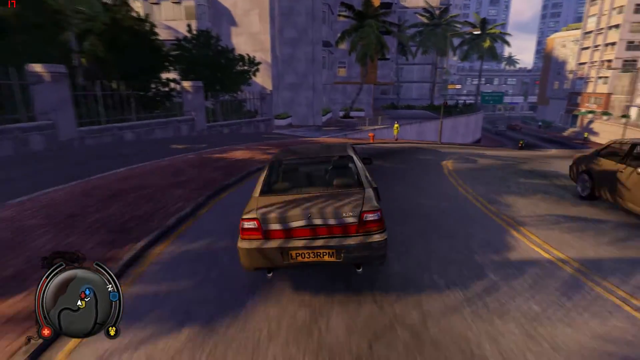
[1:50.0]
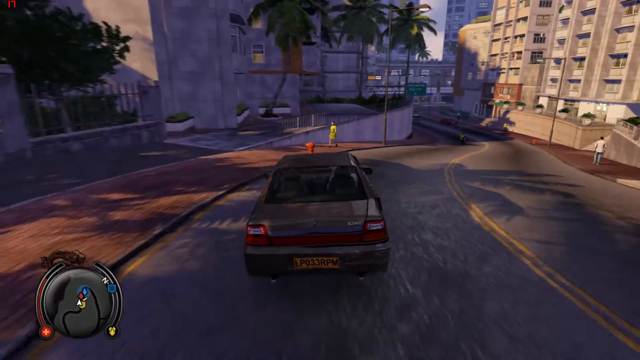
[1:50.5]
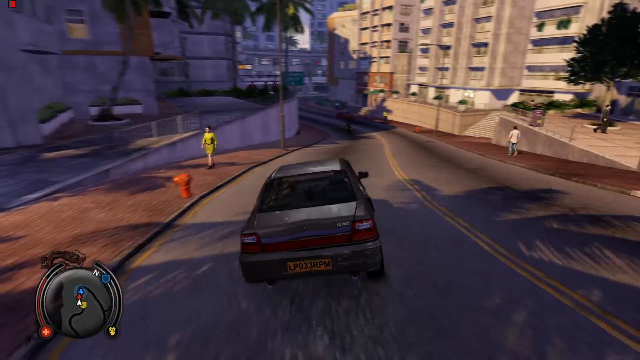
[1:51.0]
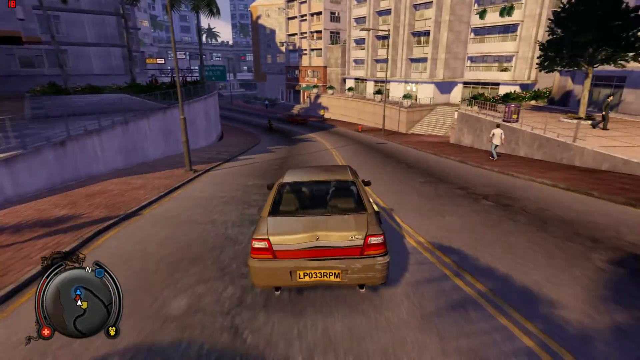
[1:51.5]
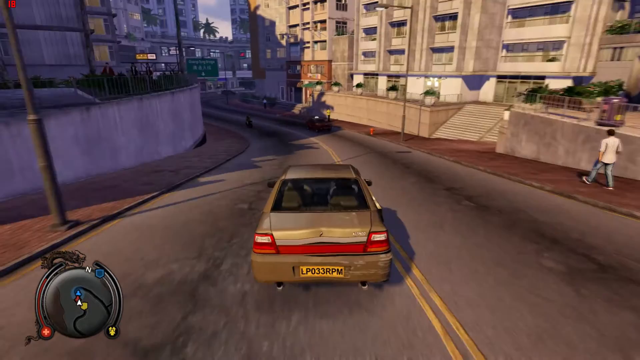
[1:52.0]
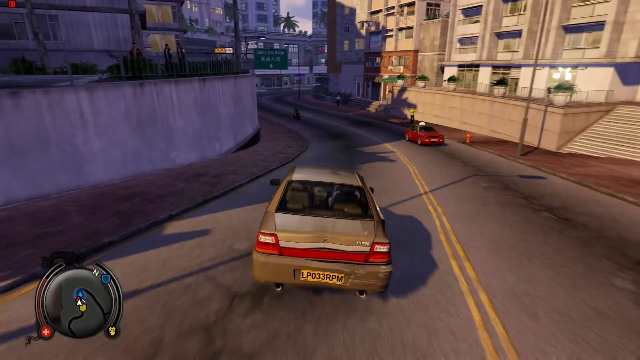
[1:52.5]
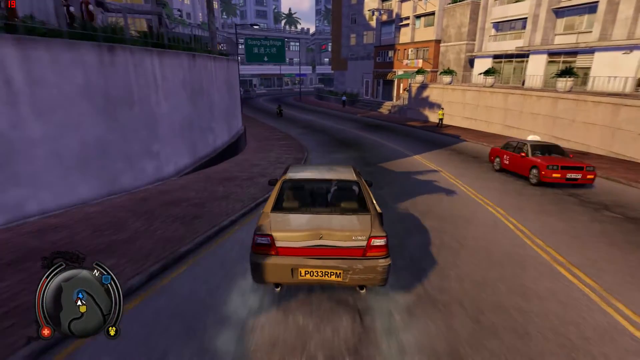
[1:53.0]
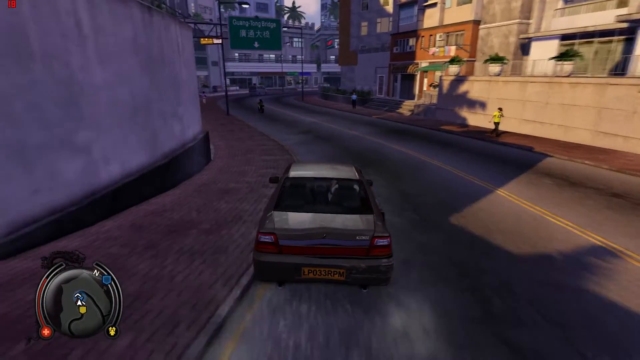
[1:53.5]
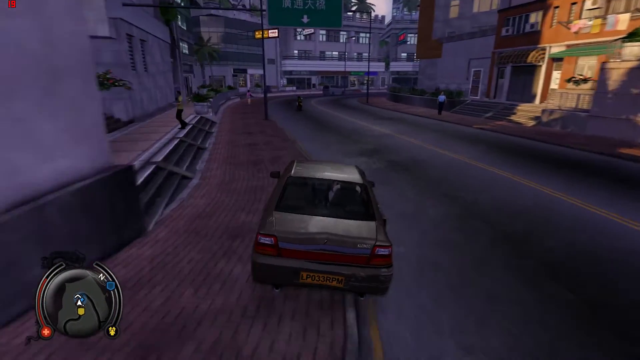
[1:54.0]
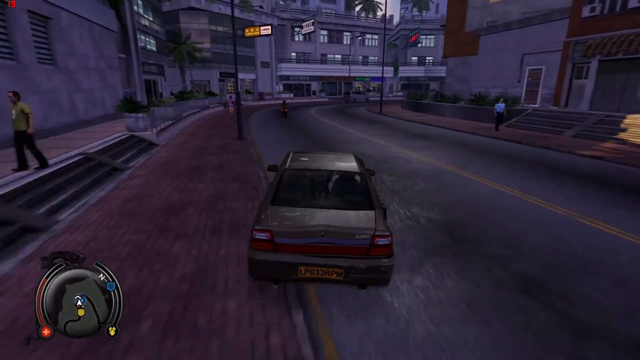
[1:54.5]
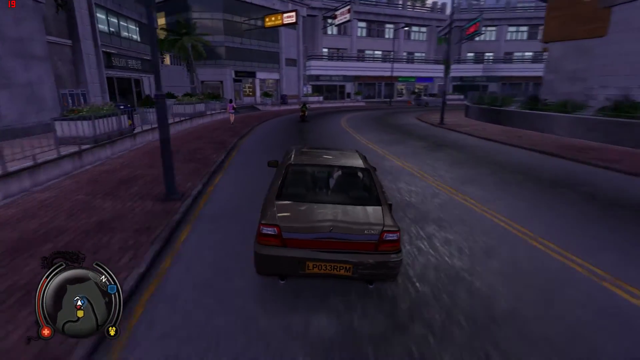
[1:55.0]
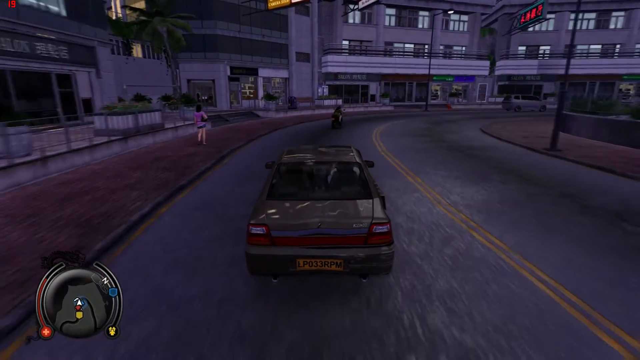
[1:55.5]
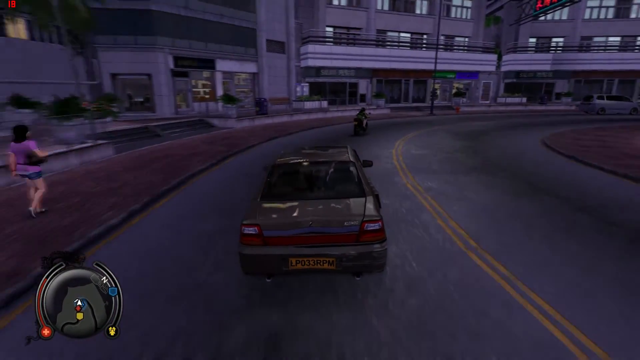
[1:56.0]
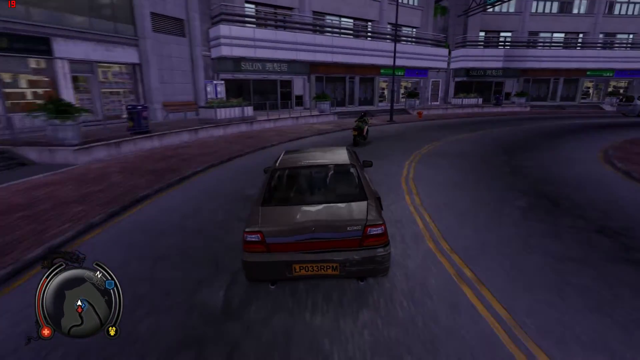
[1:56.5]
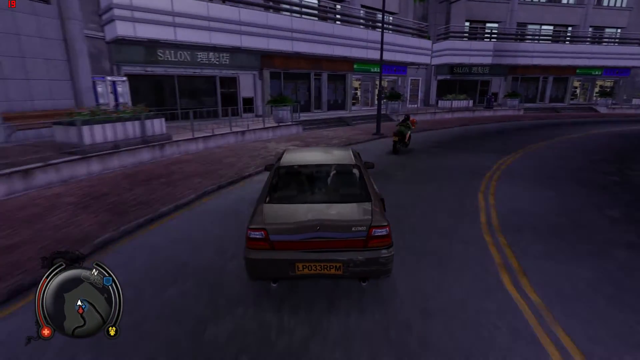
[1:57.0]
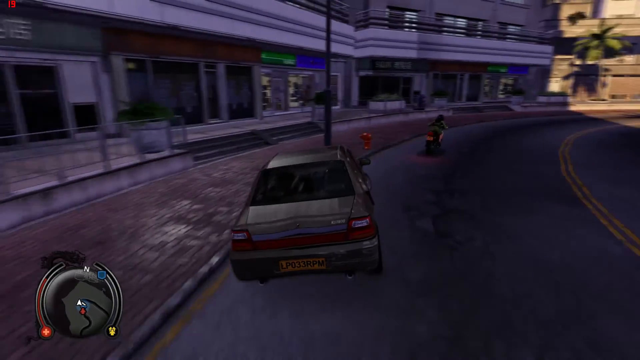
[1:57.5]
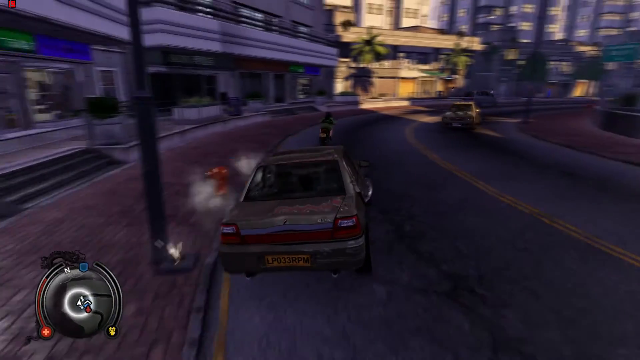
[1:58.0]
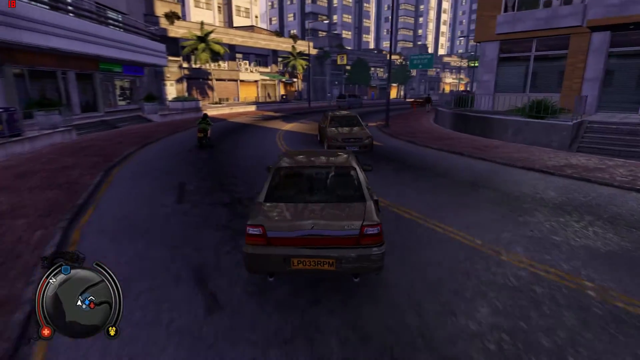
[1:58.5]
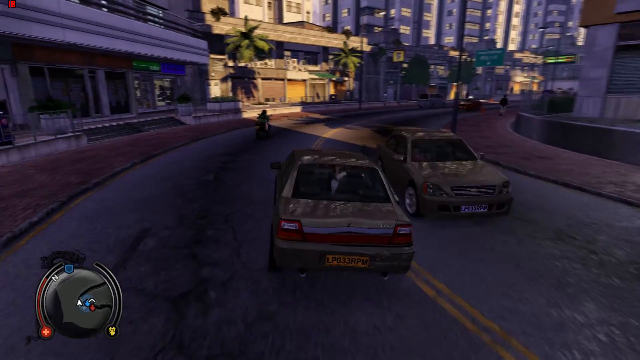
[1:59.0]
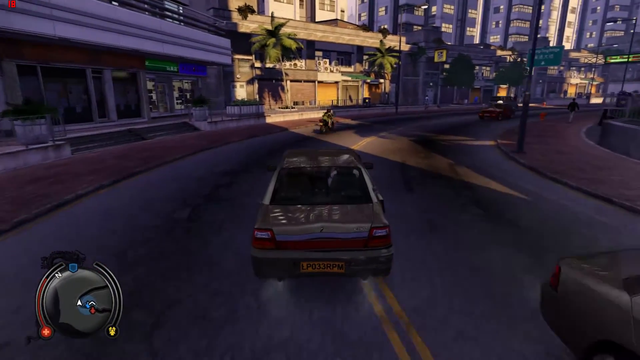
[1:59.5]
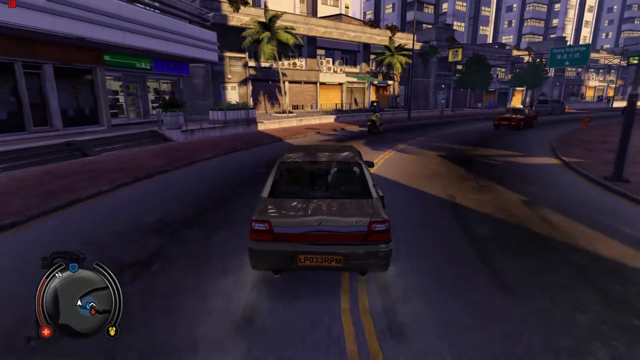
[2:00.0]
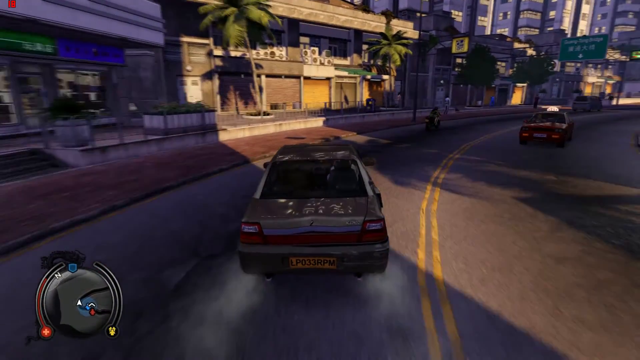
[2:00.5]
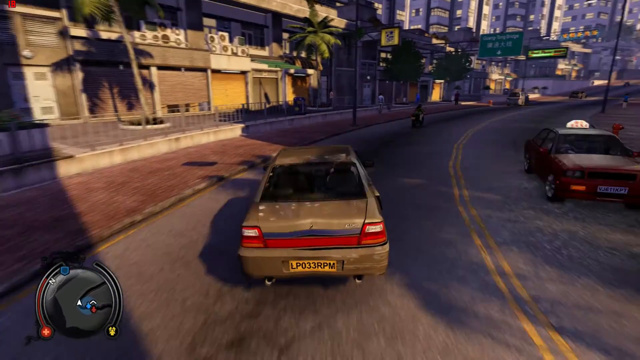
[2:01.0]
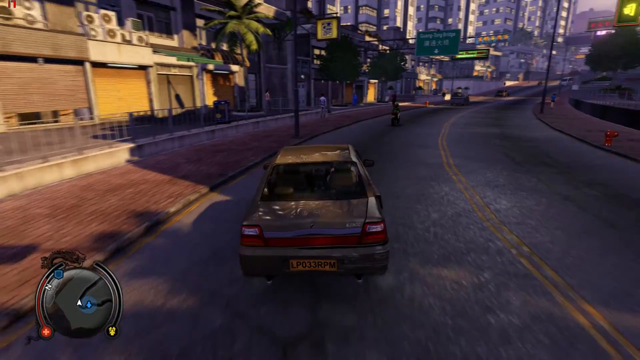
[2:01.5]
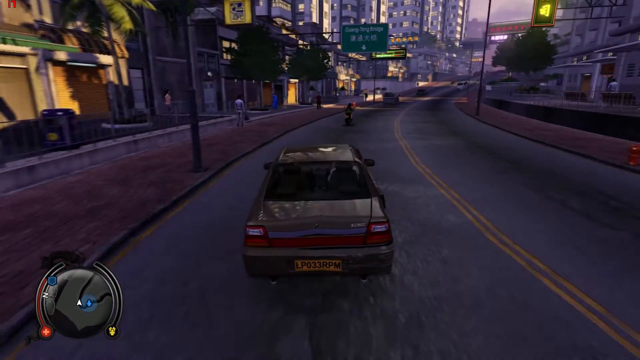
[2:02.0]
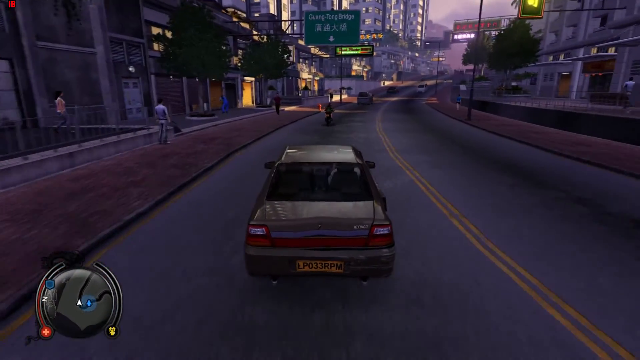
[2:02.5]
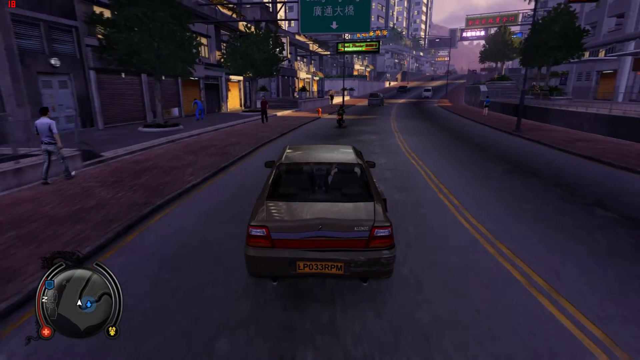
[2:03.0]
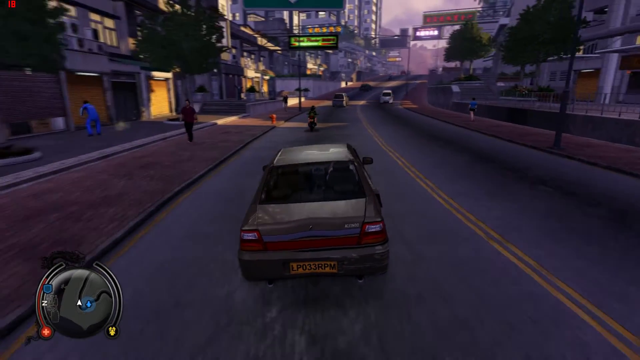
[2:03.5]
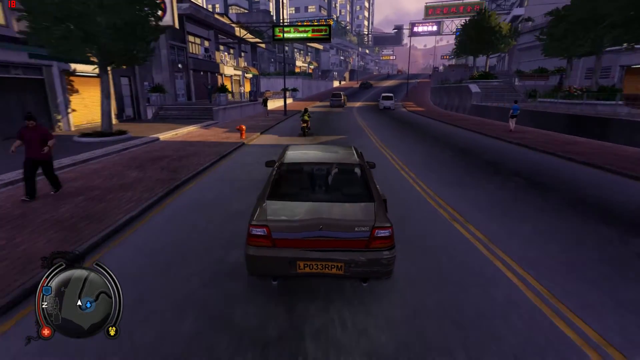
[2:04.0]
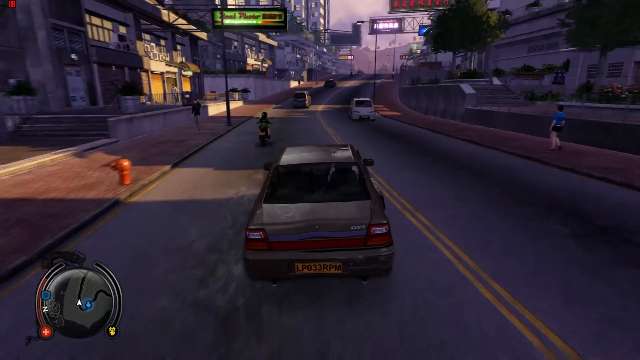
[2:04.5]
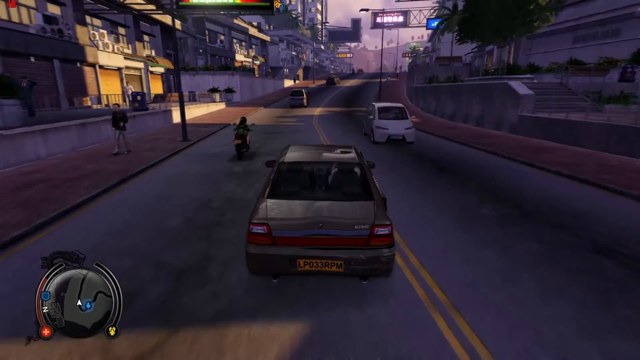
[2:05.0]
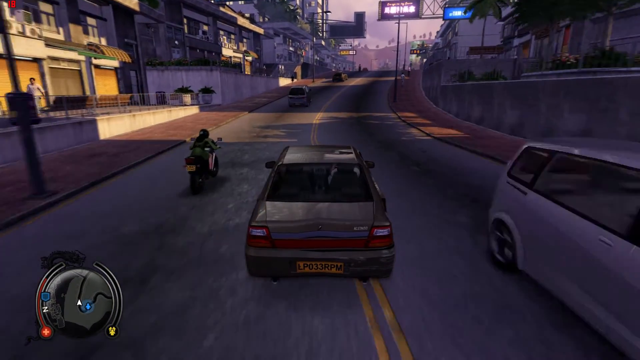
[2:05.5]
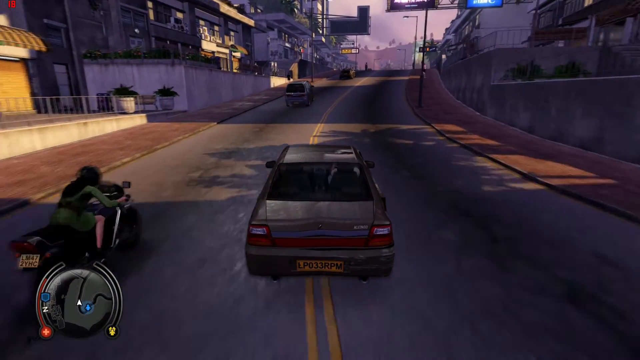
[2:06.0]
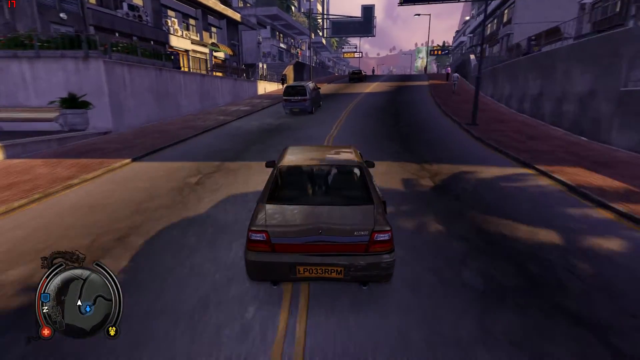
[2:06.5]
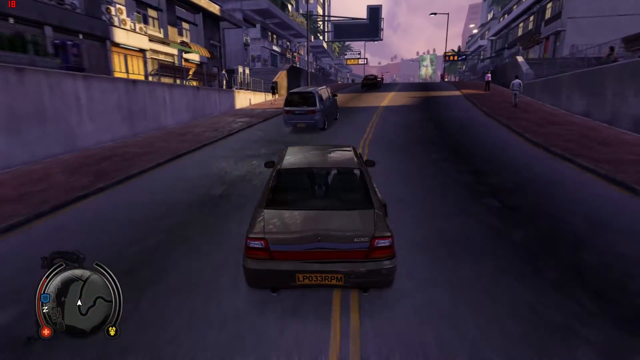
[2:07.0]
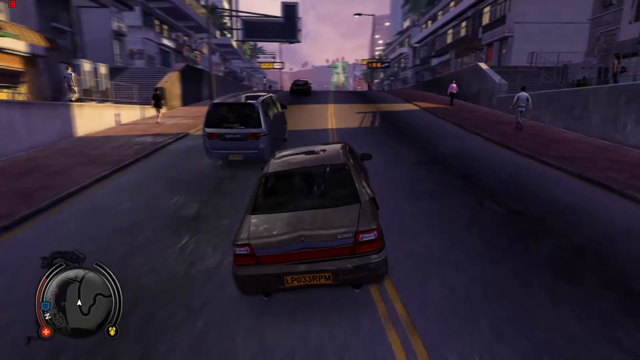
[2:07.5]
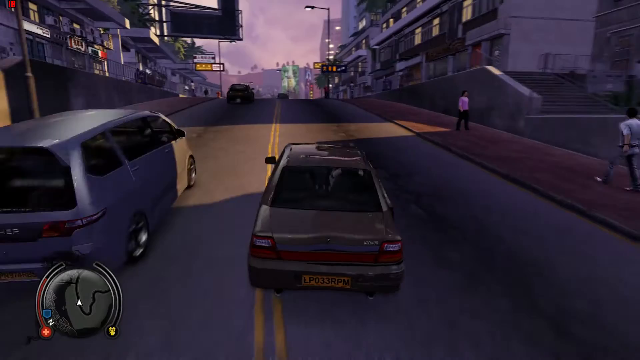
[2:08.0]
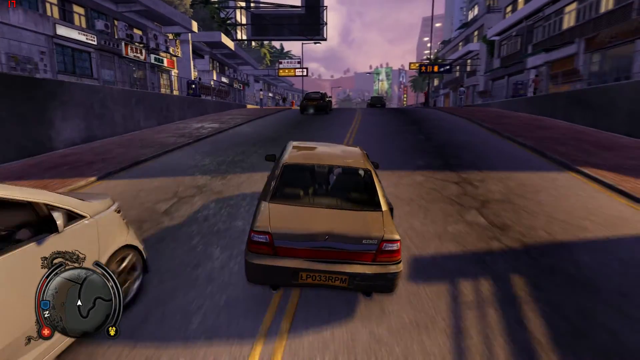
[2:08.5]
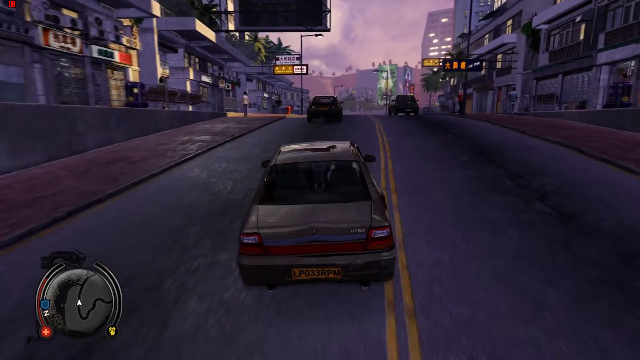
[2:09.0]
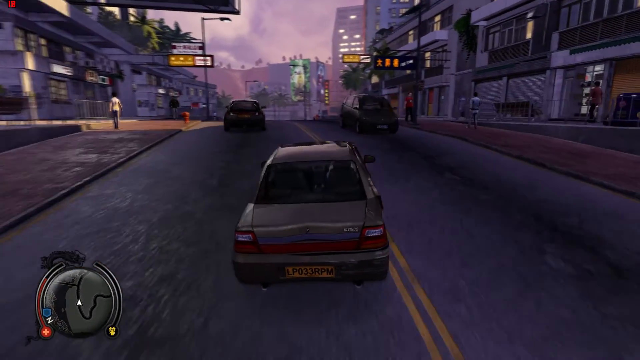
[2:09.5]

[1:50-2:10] The vehicle continues driving on the left-hand side of a one-lane street with a double yellow line down the middle. At a bend, the front left corner of the vehicle clips a light pole on the left, and the vehicle almost collides with a moped driving in the same lane. It passes many businesses, houses and pedestrians on the walkway, then passes under another green street sign with English and Chinese writing. The vehicle crosses the double yellow line to overtake the moped and a minivan, almost colliding with a vehicle traveling in the opposite direction as a result. The vehicle has a yellow license plate with black text reading "LP033RPM", two circular silver exhaust tips, one on each side, and two taillights on either side of the tailgate, connected by a red bar extending from the bottom of the tailgate. Above the taillight on the tailgate is a white bar or silver trim piece. The background of the scene is tinted purple.